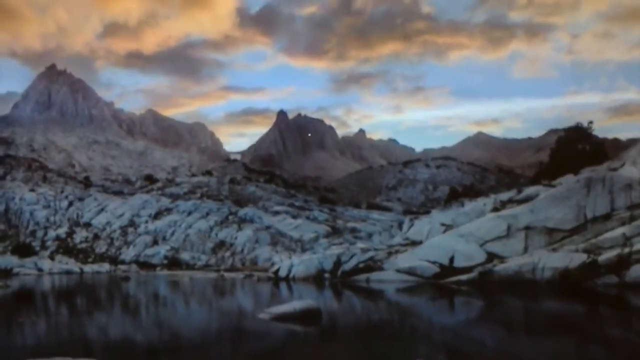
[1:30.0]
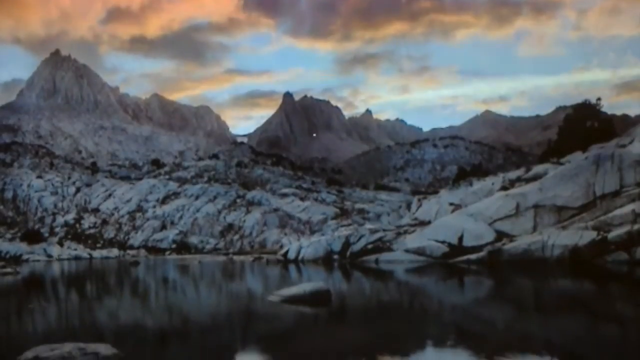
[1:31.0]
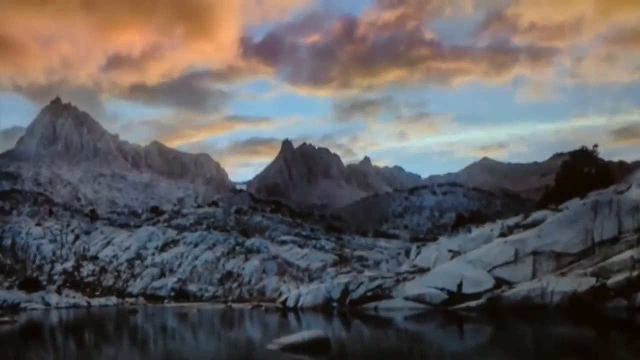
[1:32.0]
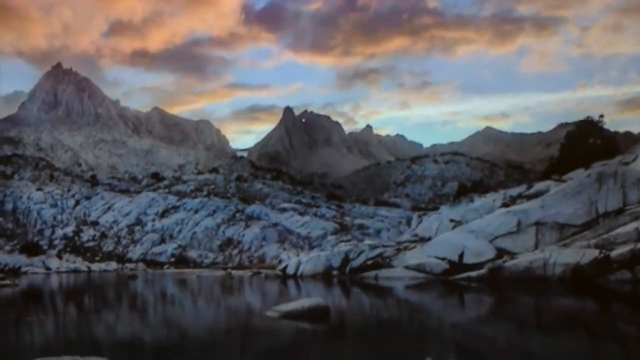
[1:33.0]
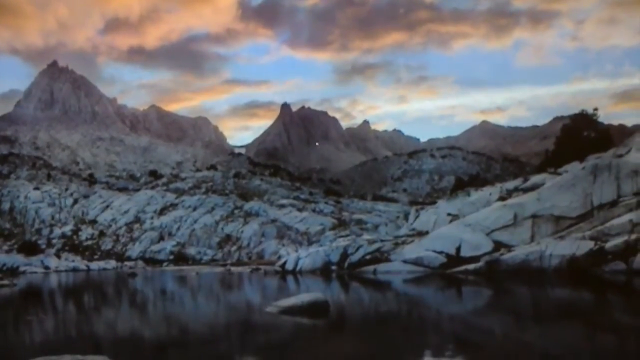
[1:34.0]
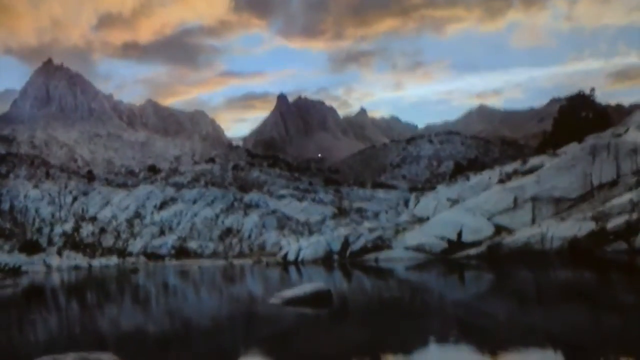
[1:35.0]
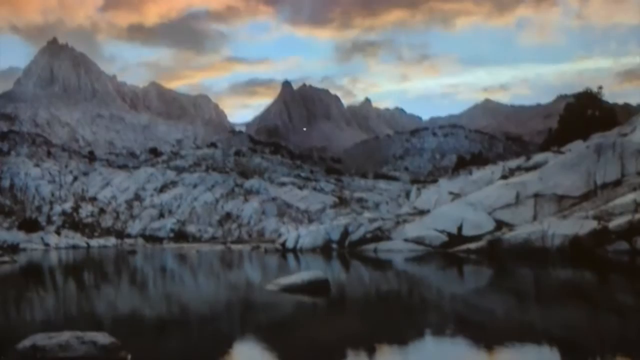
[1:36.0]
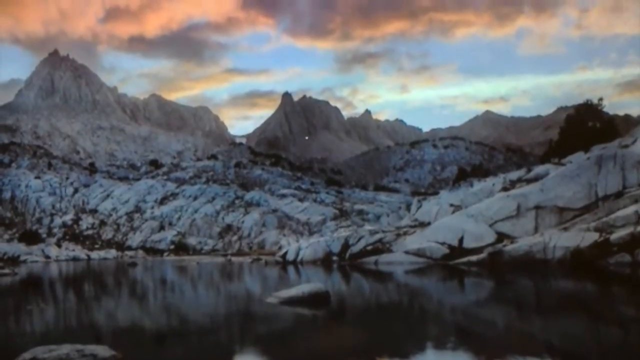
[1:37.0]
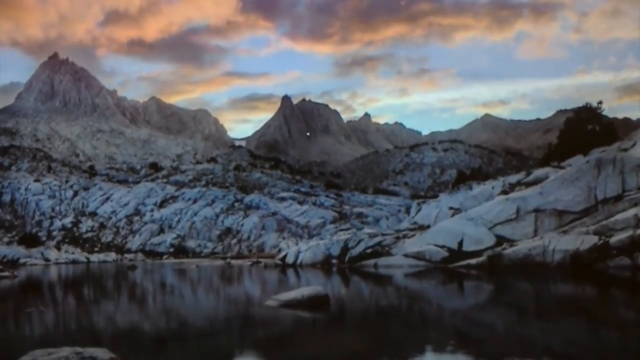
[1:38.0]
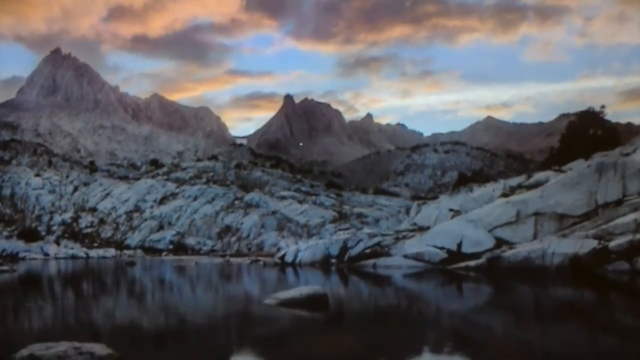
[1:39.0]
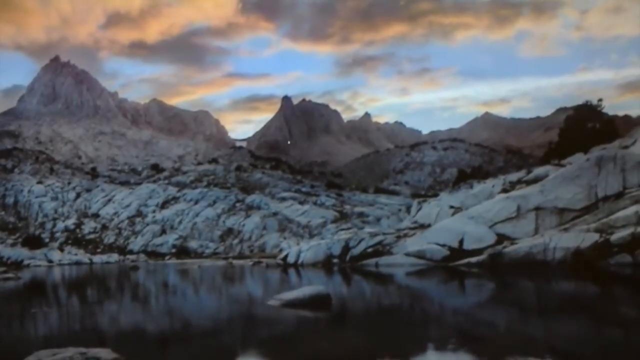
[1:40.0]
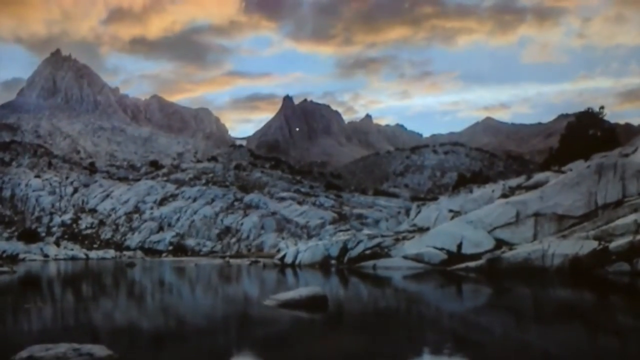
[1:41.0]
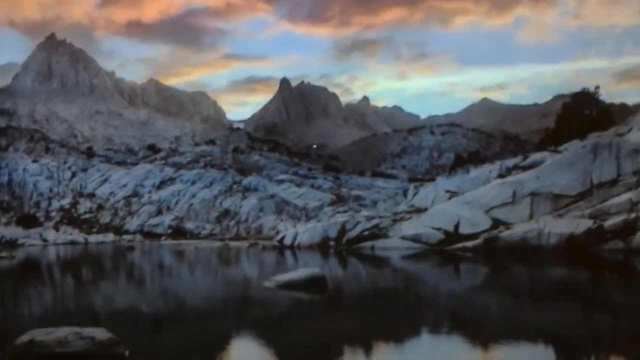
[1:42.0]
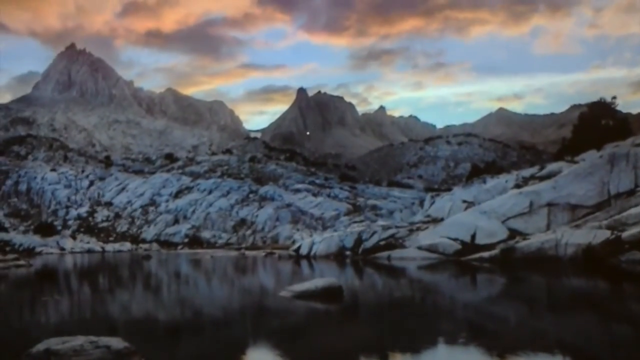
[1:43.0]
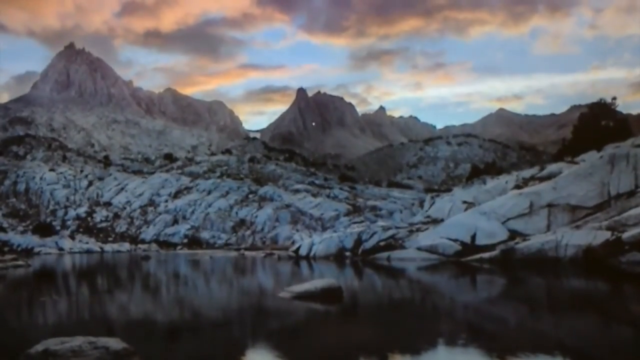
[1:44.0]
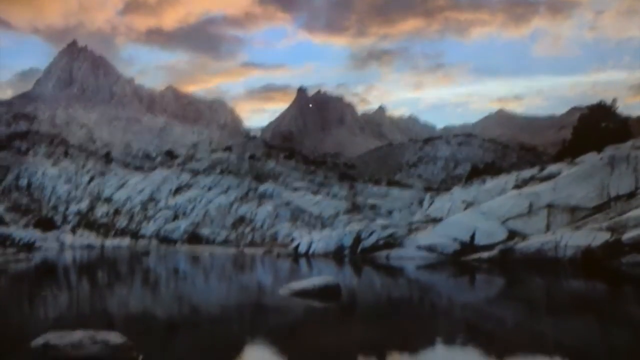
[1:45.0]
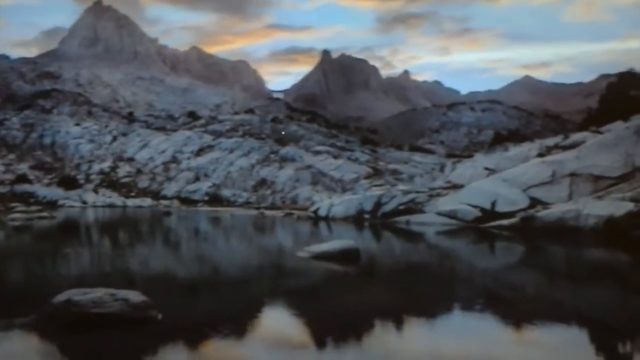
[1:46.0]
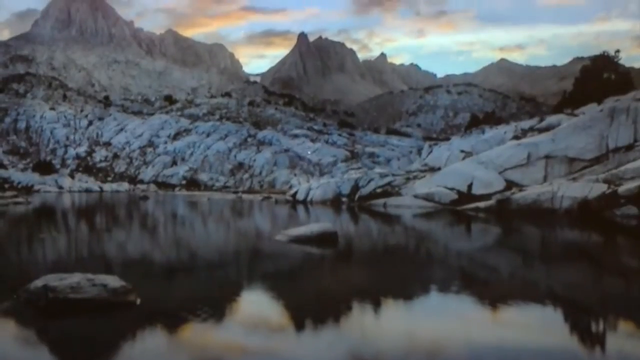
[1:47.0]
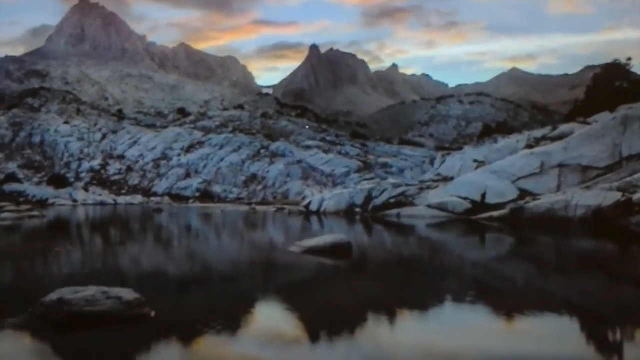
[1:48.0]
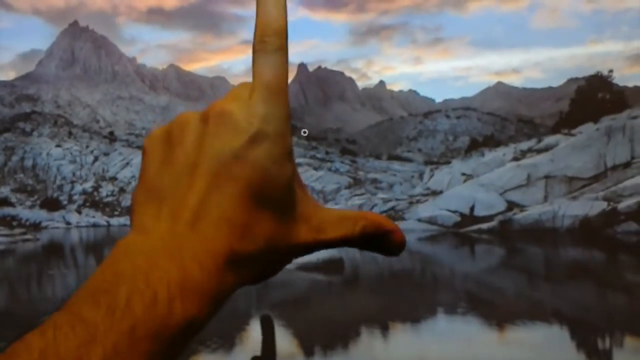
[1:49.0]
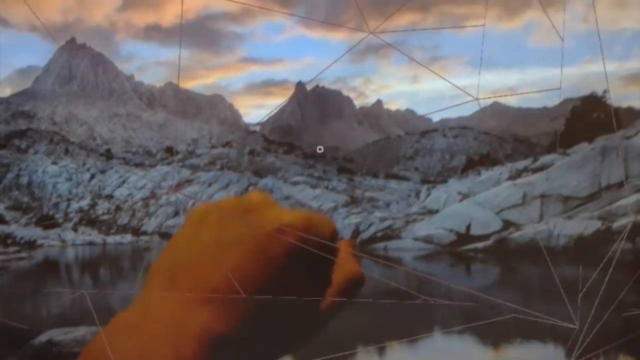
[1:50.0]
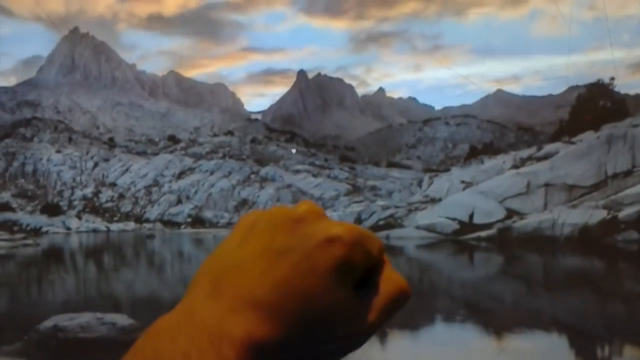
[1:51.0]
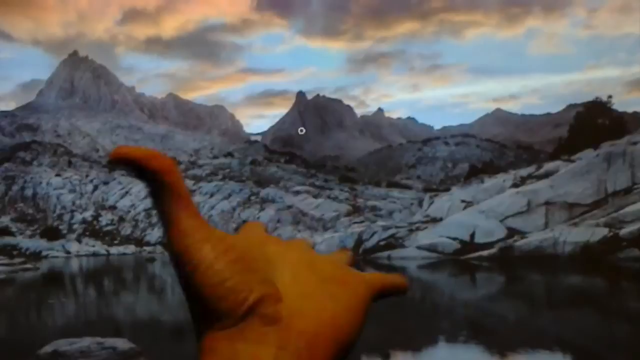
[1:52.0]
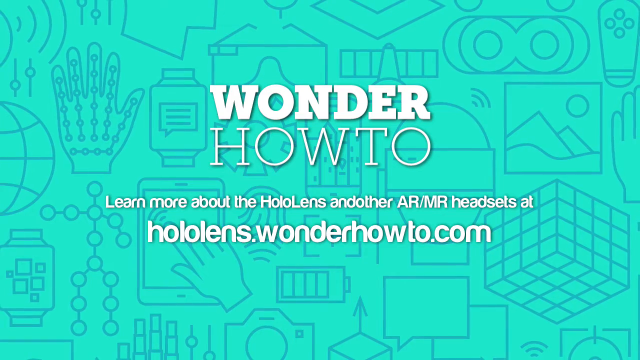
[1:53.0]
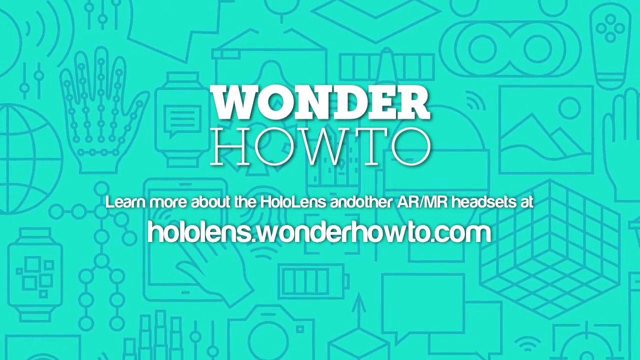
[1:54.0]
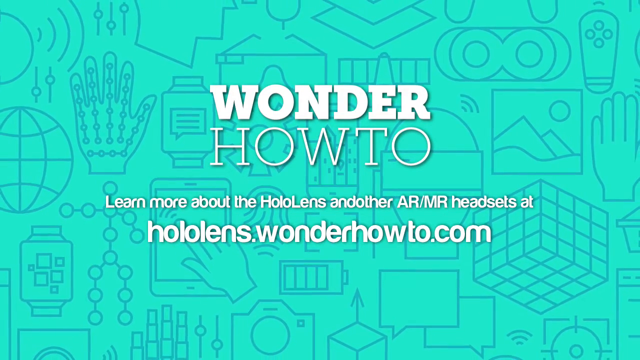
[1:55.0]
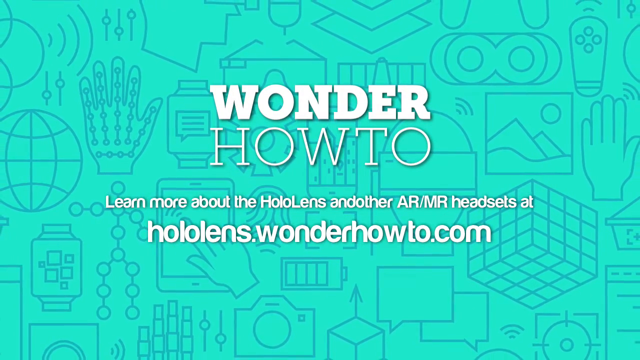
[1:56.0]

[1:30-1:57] The scene looks like a body of water in front, snowy ground in the foreground leading to mountains, and a light blue sky with some clouds at the top. The view trembles, panning up and down a bit, and a white dot in the middle of the frame seems to move up, down, left and right erratically. A left hand appears from the bottom left into the middle, in what looks like a first-person perspective, with the palm facing away. The index finger and thumb are extended and pinch together, and many very thin lines forming polygons flash over the screen and fade away. The hand then appears to make an upward motion, putting all the fingers together and then spreading them apart with the palm facing up. The video blacks out and cuts to an outro screen in a pale green color covered with gray line drawings of icons that look like hands, a world sphere, circles, a smartphone, a tablet, a battery, a camera and a Rubik's cube. White text in the foreground reads "wonder how to," and beneath it the text reads "learn more about the HoloLens and other AR/MR headsets at hololens.wonderhowto.com."